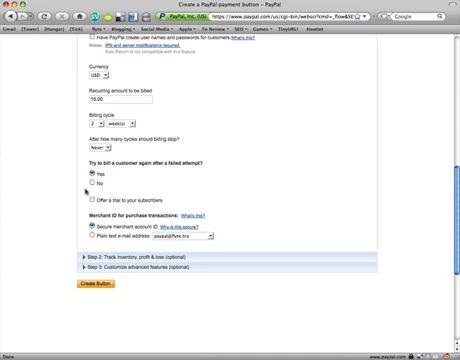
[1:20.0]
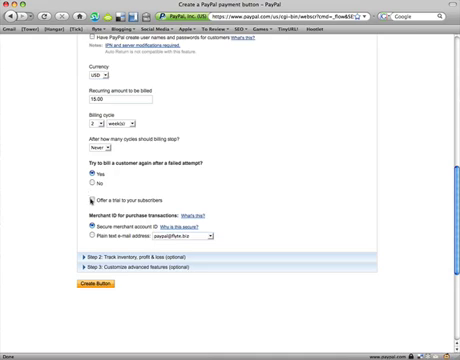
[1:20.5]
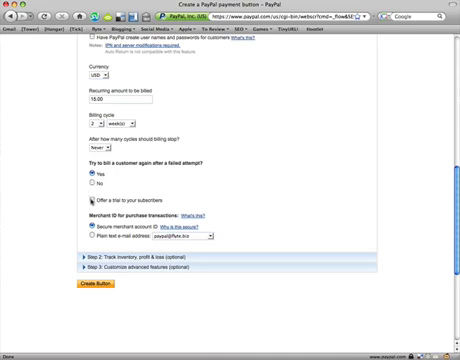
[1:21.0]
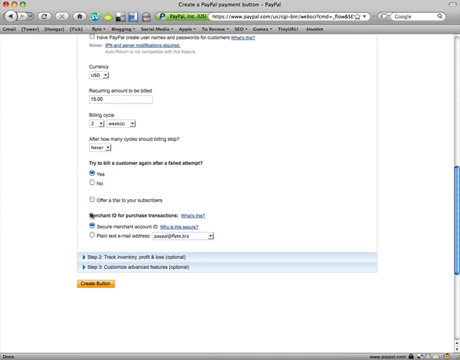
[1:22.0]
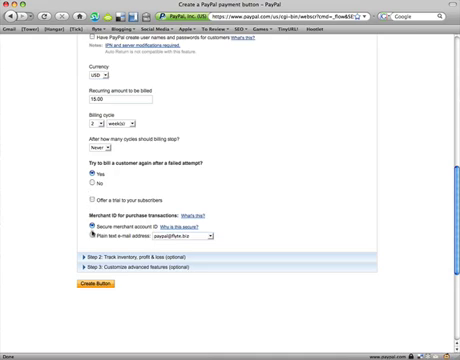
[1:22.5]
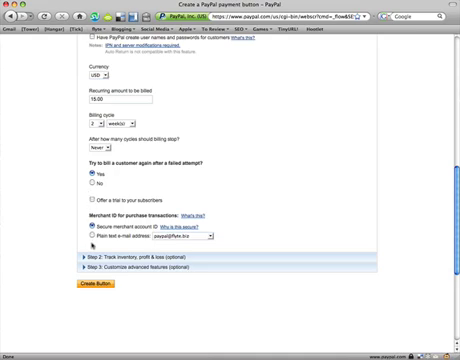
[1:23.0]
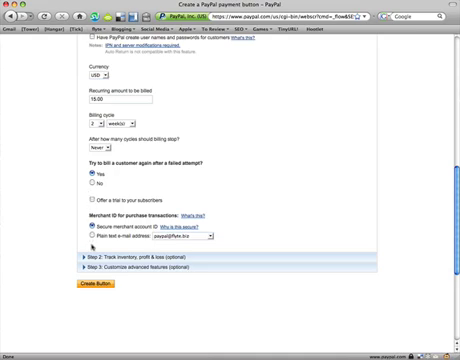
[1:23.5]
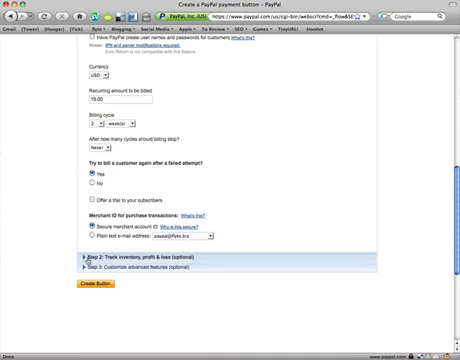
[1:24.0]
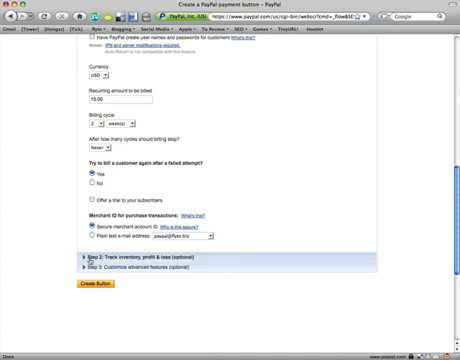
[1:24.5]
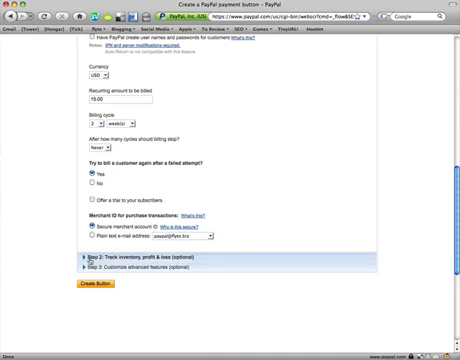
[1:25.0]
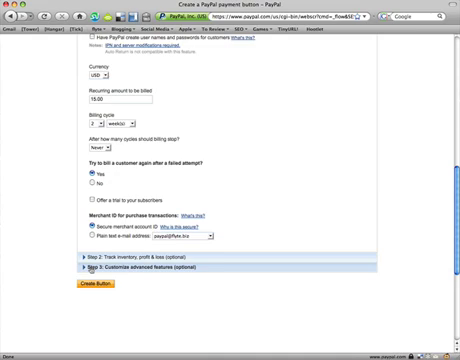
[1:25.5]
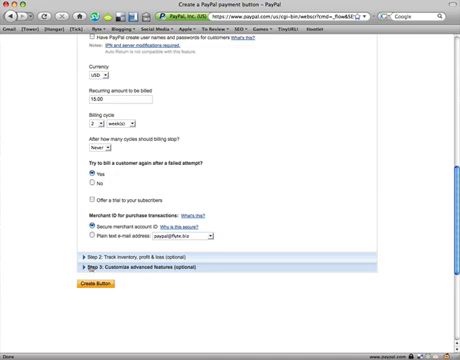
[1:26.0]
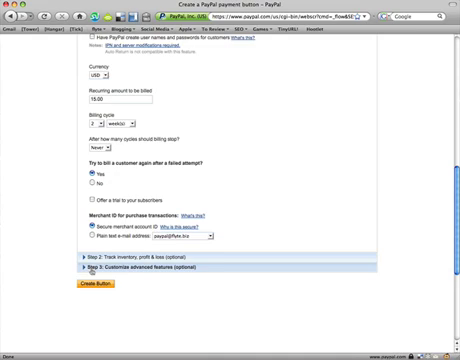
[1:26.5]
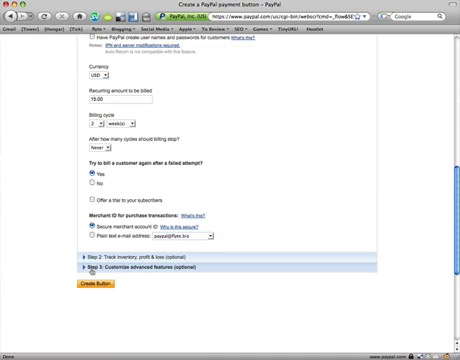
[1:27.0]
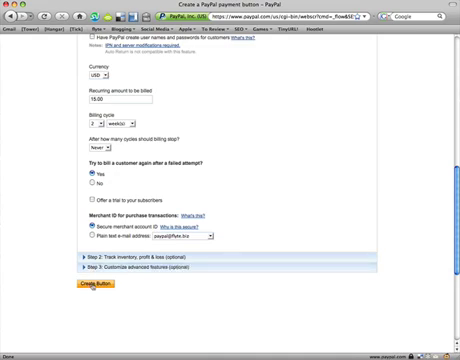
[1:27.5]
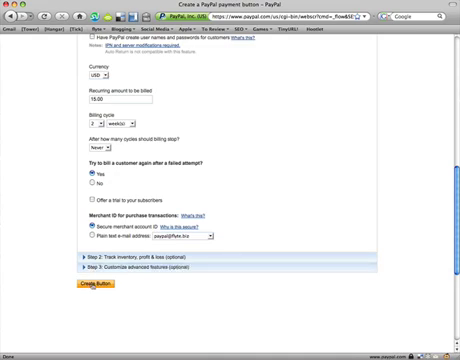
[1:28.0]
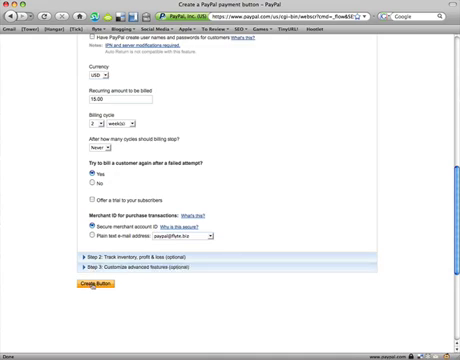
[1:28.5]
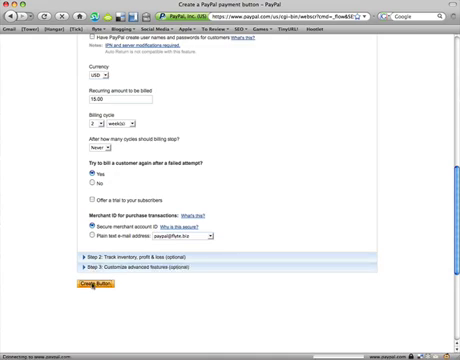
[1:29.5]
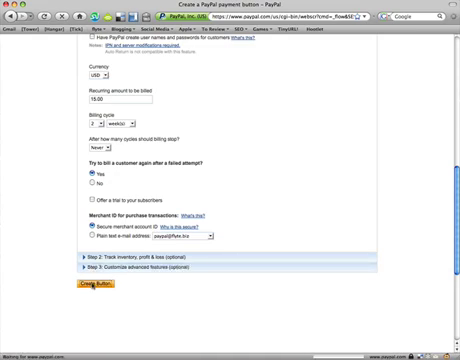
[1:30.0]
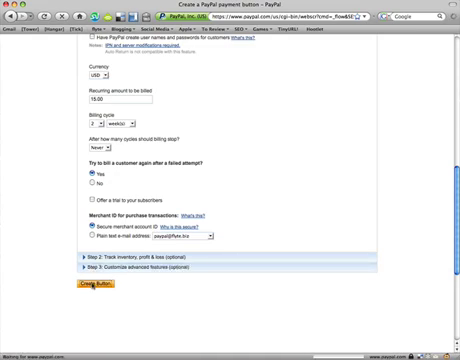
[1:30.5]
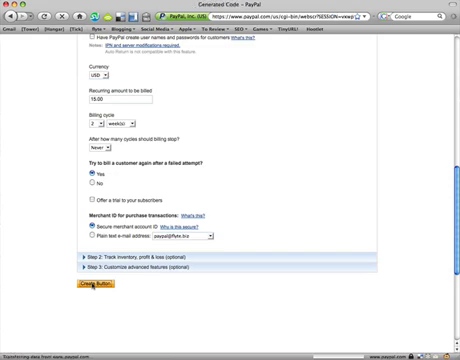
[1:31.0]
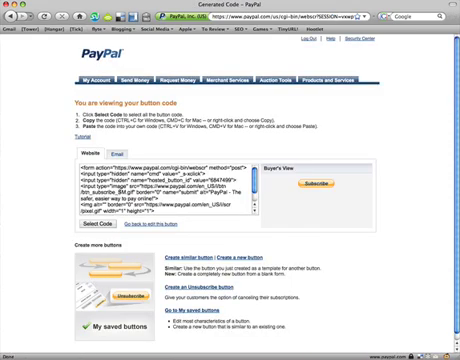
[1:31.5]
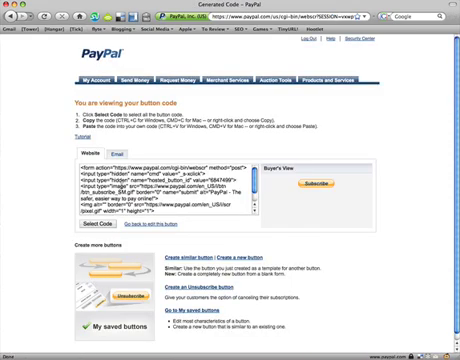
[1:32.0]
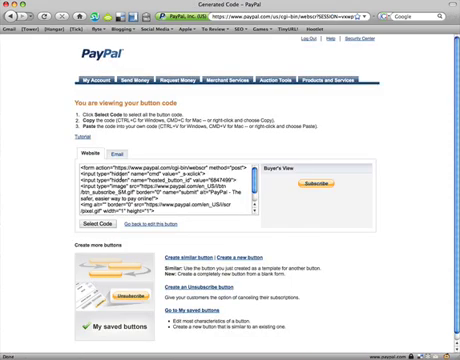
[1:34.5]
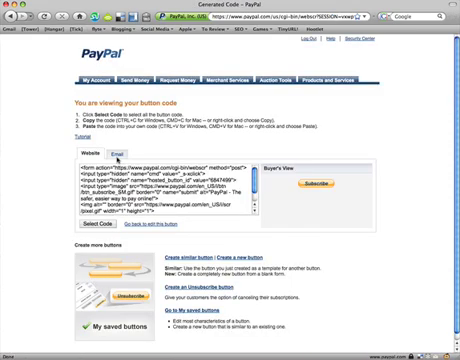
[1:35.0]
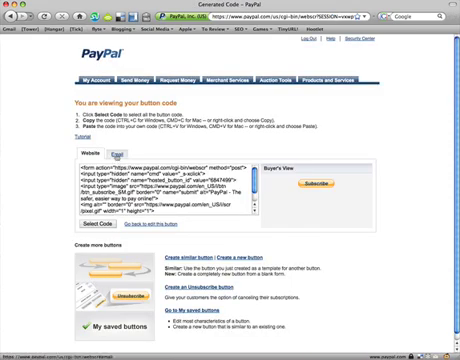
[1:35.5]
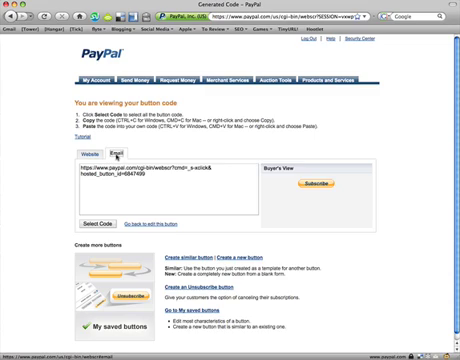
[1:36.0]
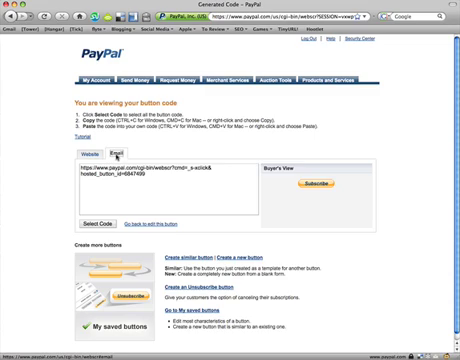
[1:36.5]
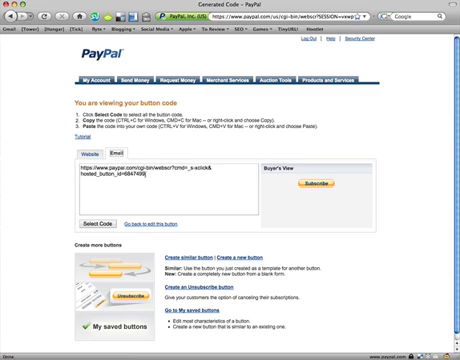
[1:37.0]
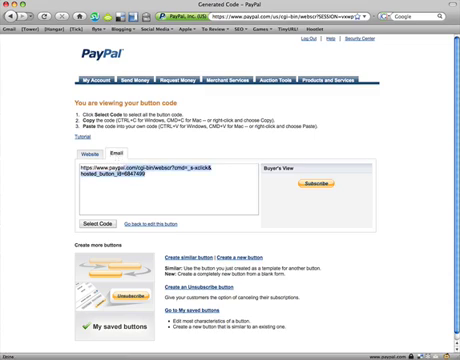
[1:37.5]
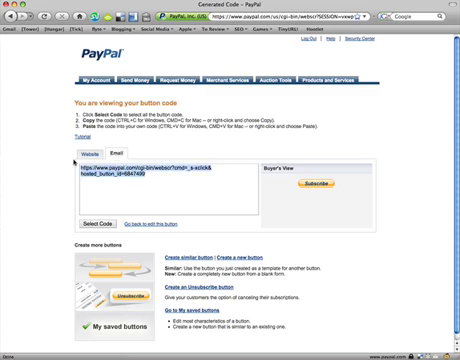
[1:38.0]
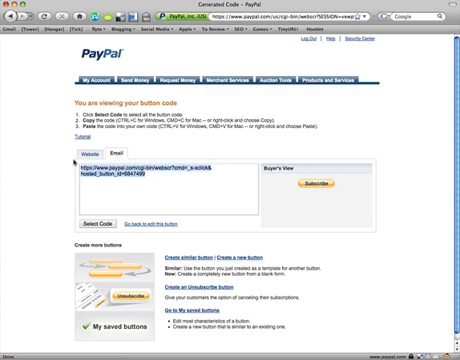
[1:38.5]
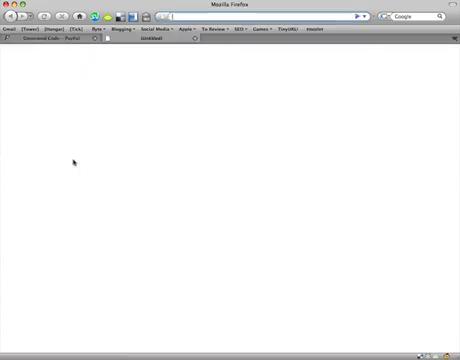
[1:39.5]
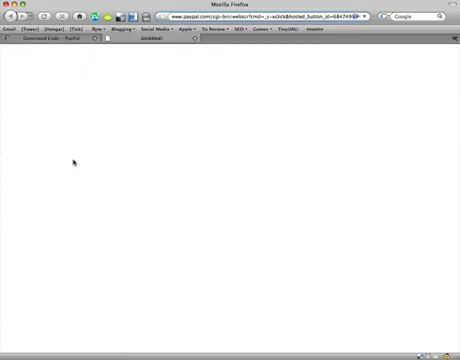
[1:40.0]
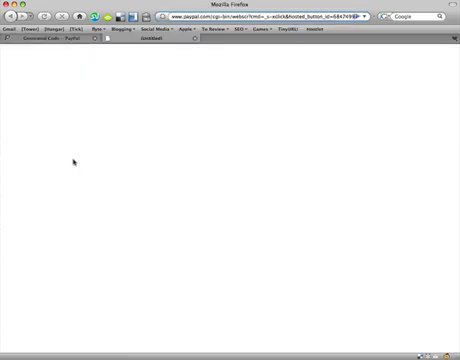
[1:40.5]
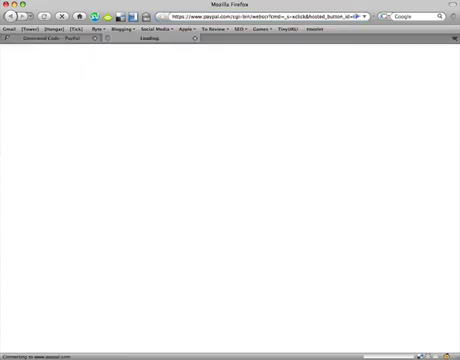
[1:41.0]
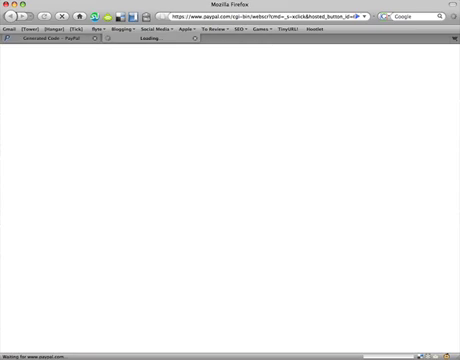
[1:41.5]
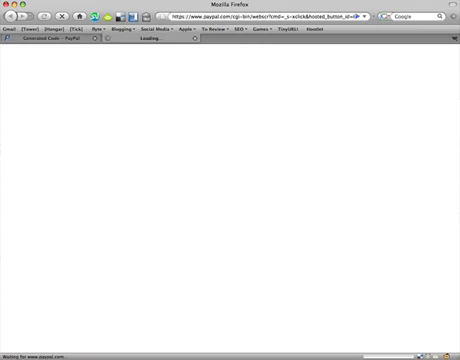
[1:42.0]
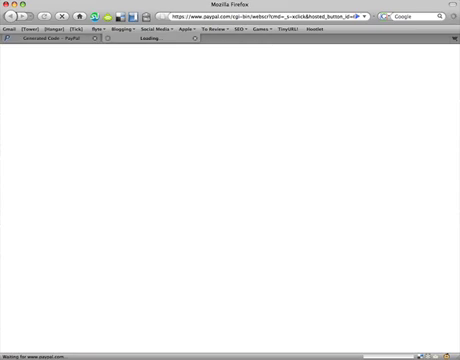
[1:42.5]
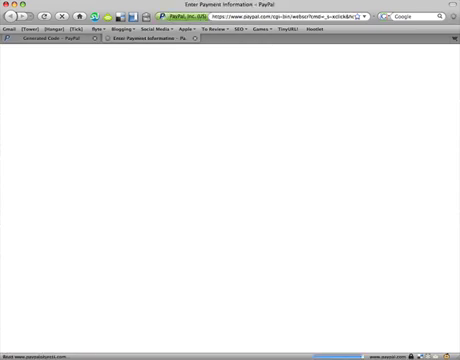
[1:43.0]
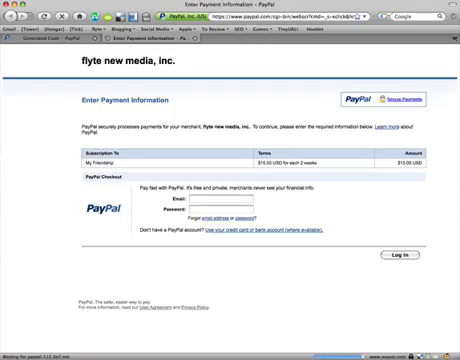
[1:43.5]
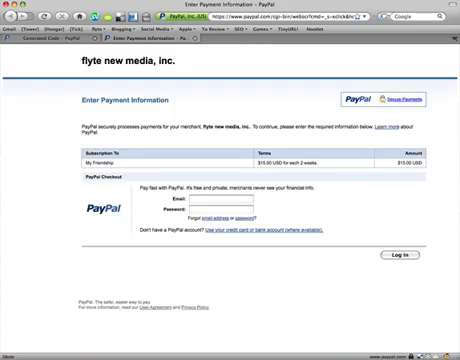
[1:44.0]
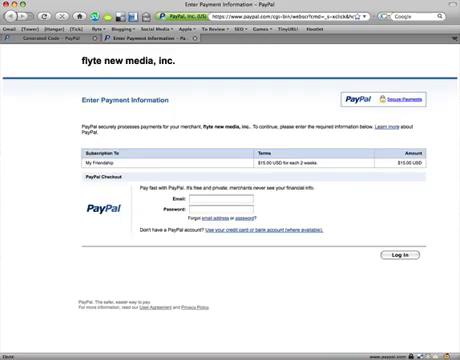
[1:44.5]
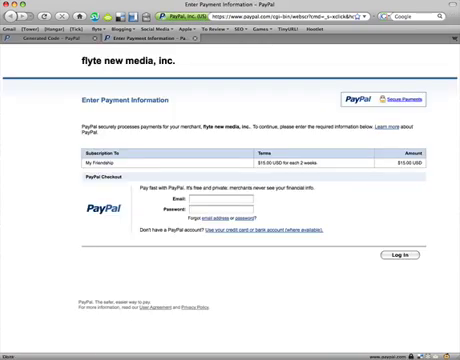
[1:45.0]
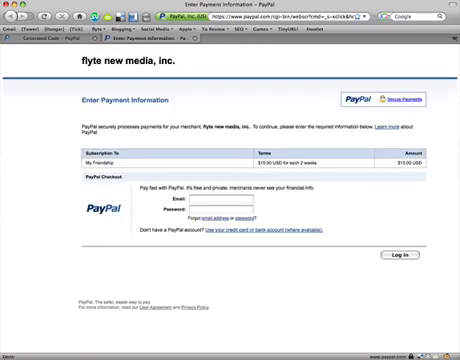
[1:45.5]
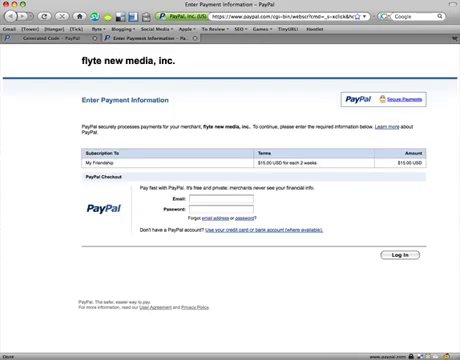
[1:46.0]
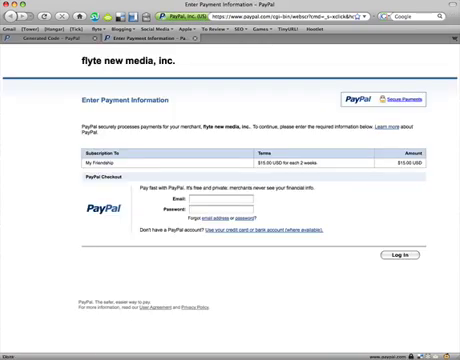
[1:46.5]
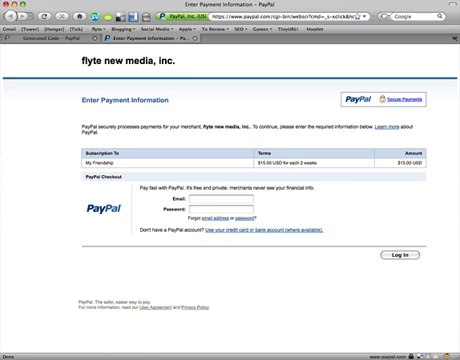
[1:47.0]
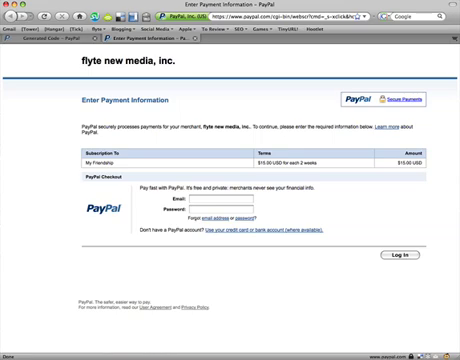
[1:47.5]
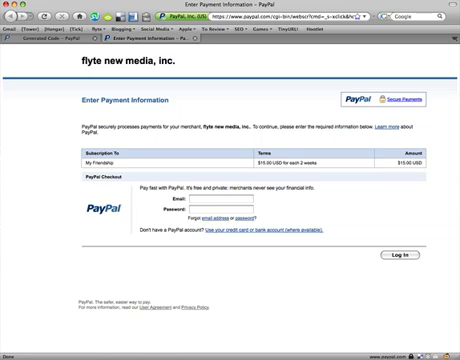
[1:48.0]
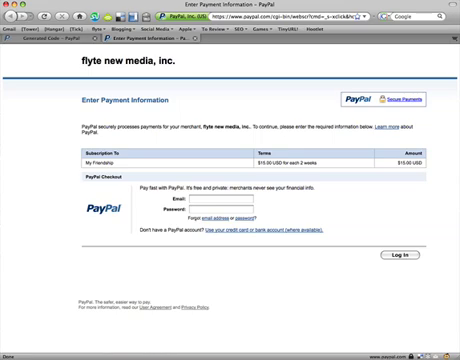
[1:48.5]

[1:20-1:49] The user navigates down to step 2 and hovers over it, then moves down to step 3 and hovers over it, then moves down to the rectangular orange "create button" button and clicks it. A new page pops up titled "you are viewing your button code." It has three numbered bullet points: the first is "click, select code, to select the button code," the second is "copy the code," and the third is "paste the code." There are two options for viewing the code: the first, website, shows the code required to embed the checkout button into a website's code; the second, email, is clicked, showing a website link that is copied and pasted into a new tab. The link brings up a checkout page with a white background and the PayPal logo present throughout, with a prompt to enter payment information and a description of the products or services being paid for. There is a field to log in to PayPal with email and password for faster checkout.